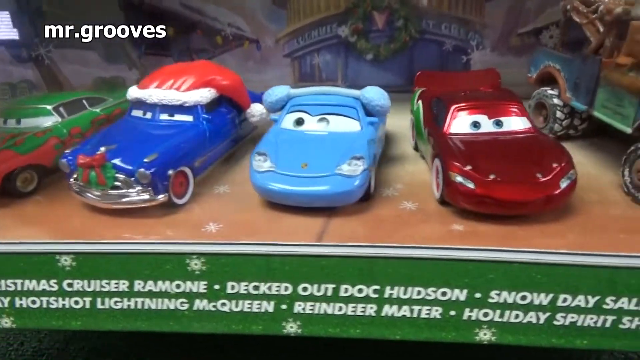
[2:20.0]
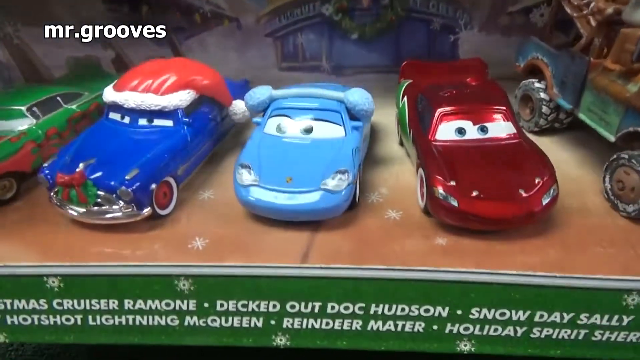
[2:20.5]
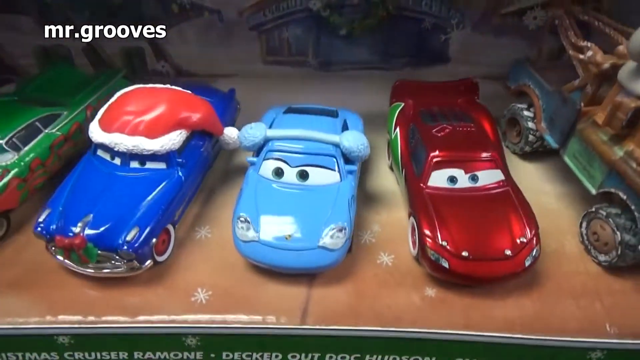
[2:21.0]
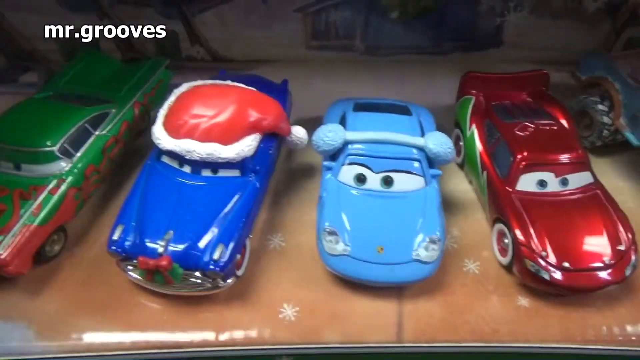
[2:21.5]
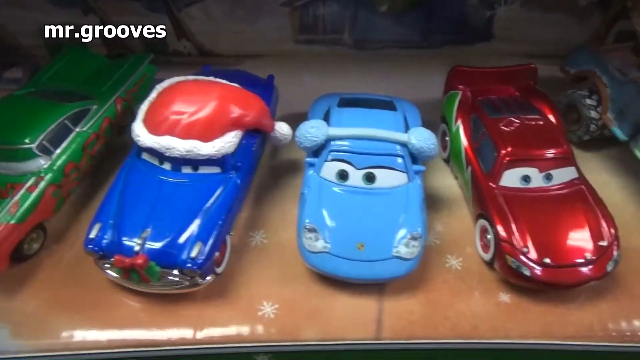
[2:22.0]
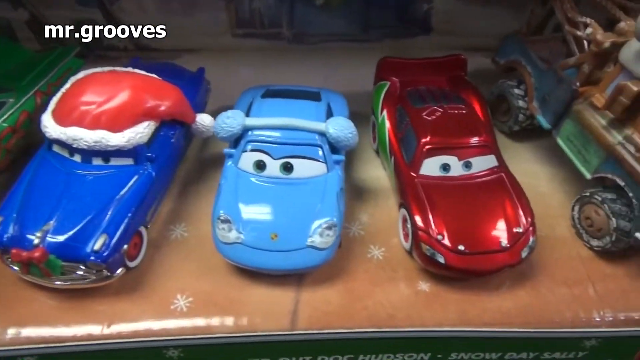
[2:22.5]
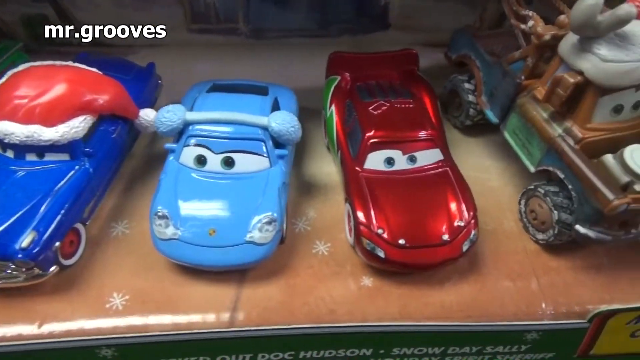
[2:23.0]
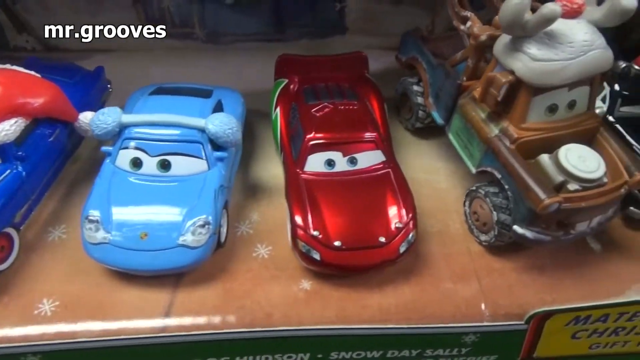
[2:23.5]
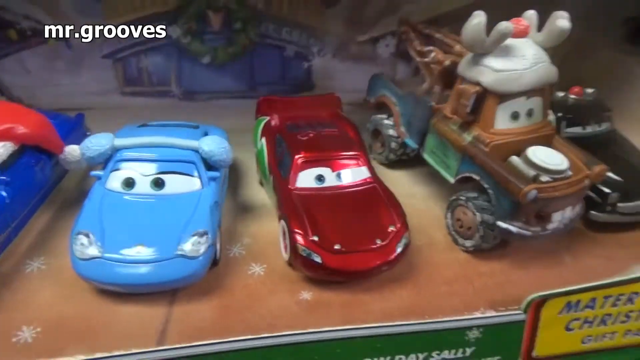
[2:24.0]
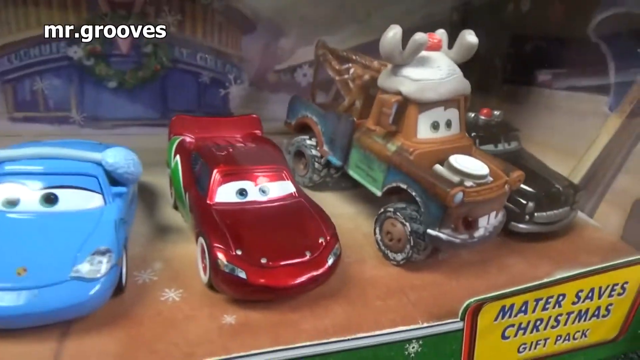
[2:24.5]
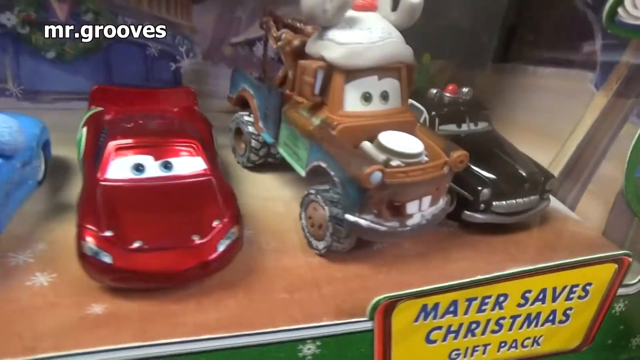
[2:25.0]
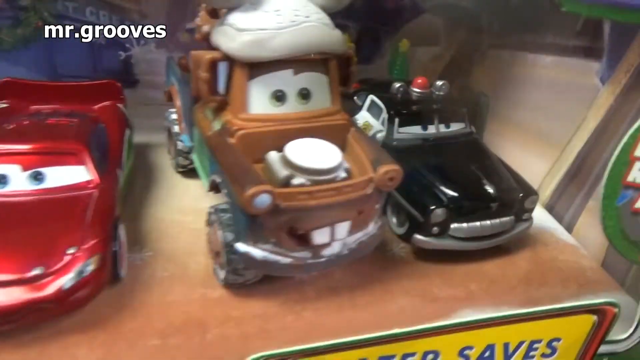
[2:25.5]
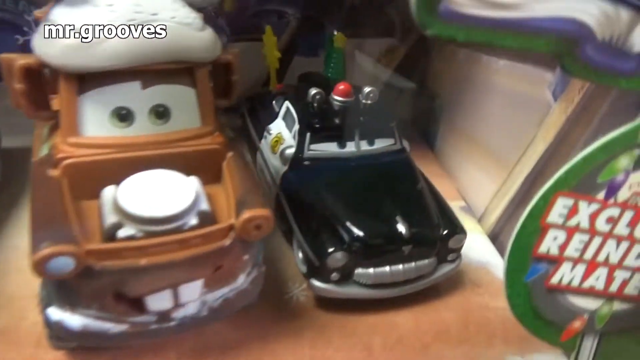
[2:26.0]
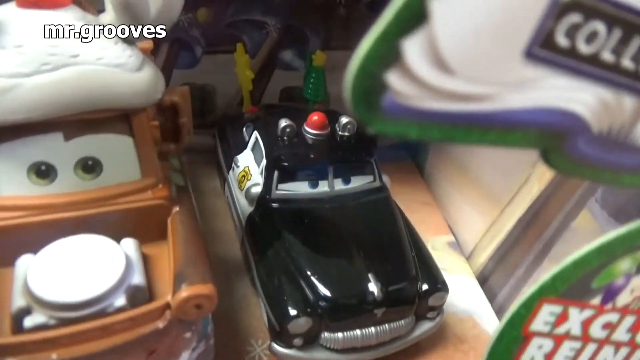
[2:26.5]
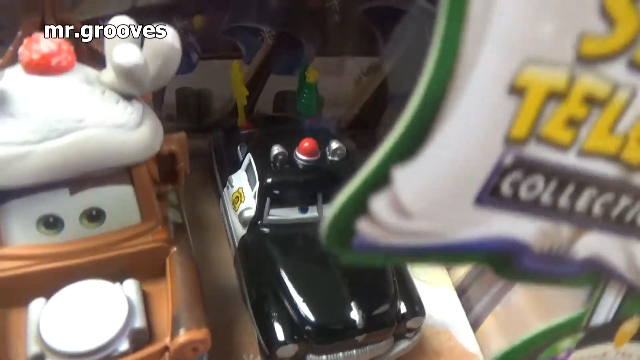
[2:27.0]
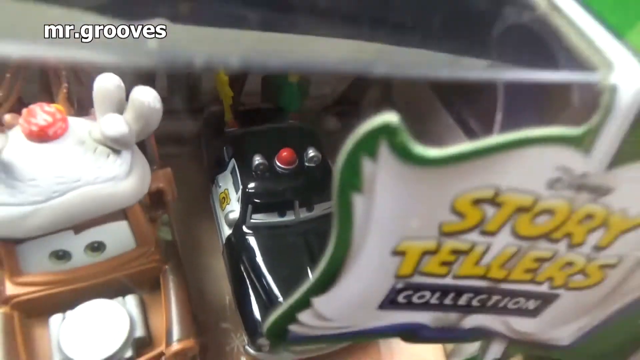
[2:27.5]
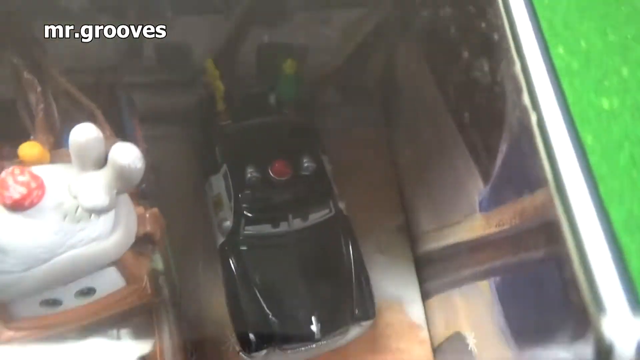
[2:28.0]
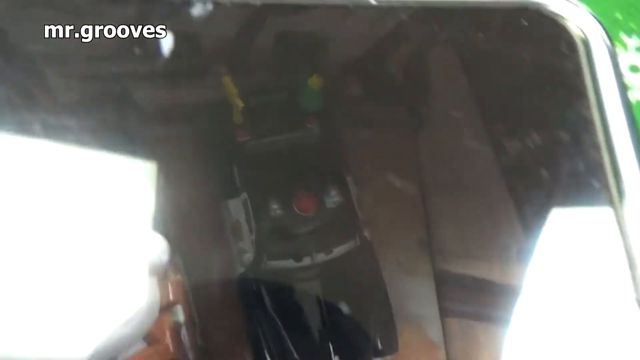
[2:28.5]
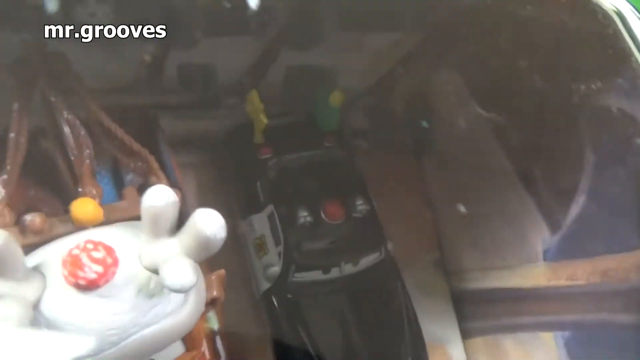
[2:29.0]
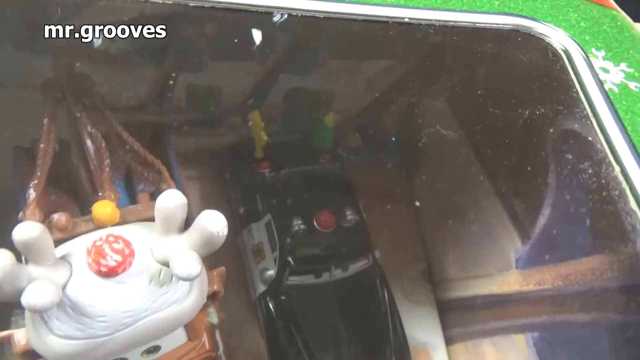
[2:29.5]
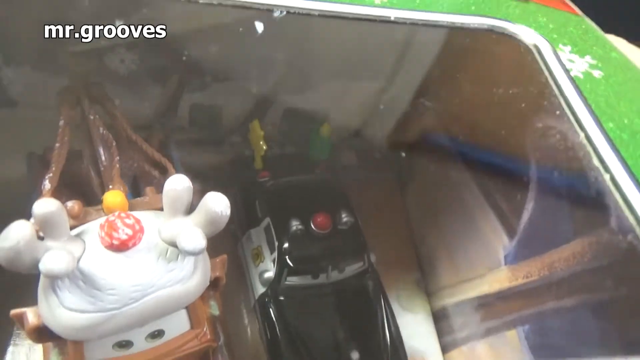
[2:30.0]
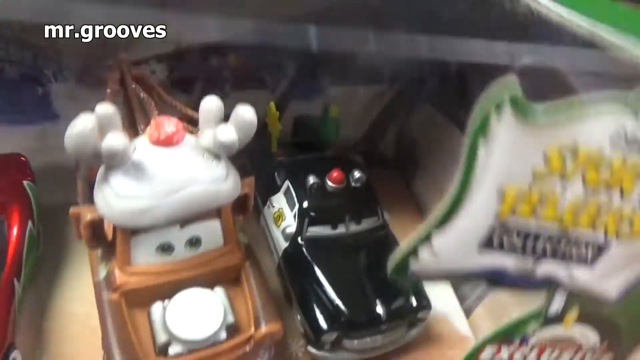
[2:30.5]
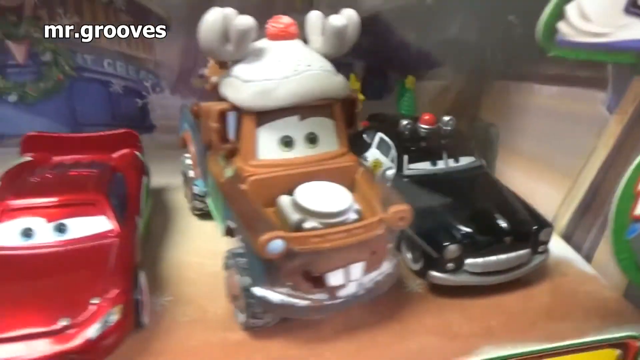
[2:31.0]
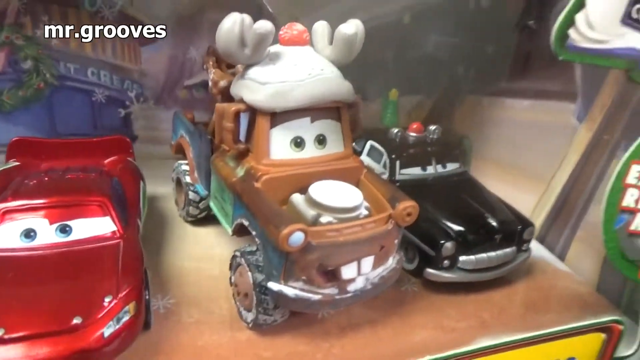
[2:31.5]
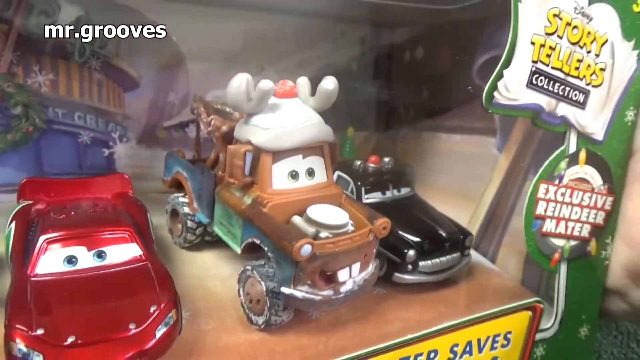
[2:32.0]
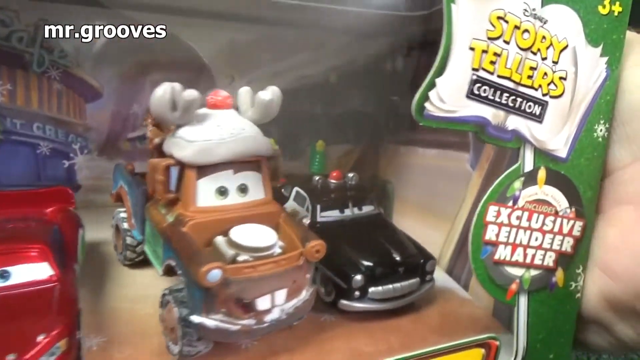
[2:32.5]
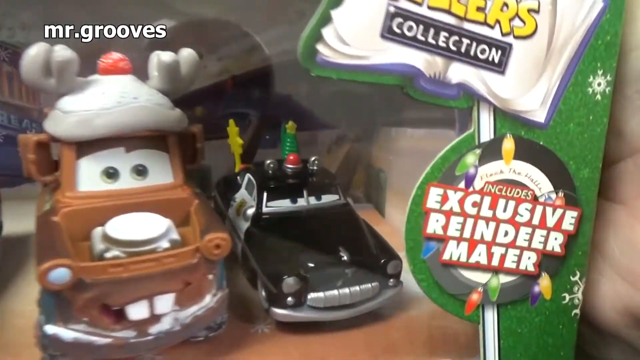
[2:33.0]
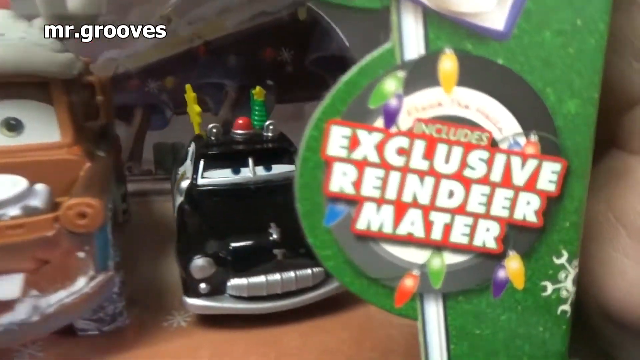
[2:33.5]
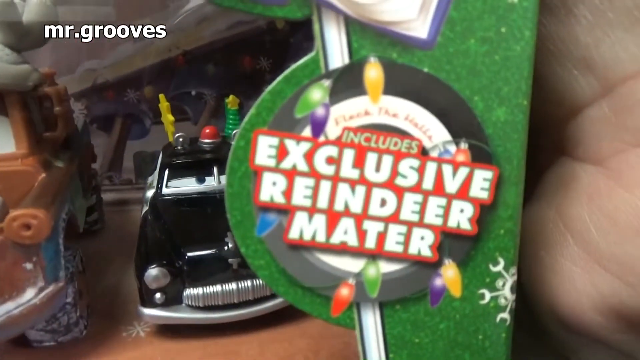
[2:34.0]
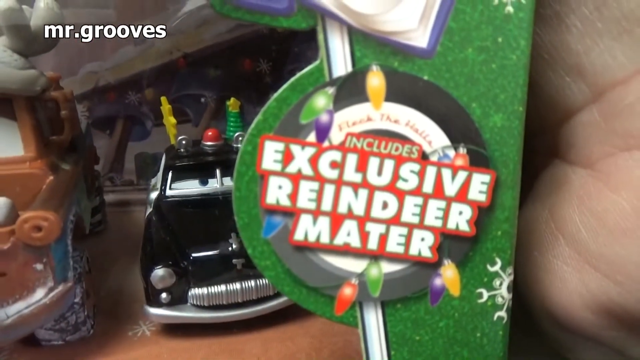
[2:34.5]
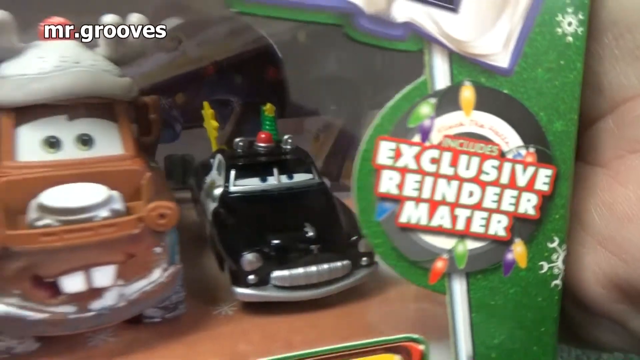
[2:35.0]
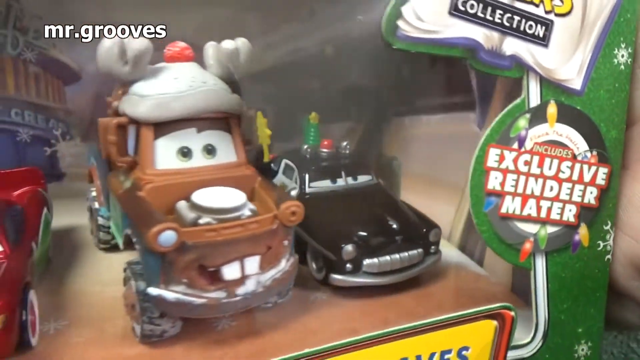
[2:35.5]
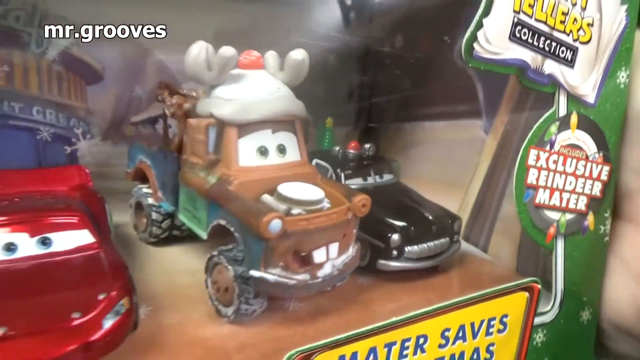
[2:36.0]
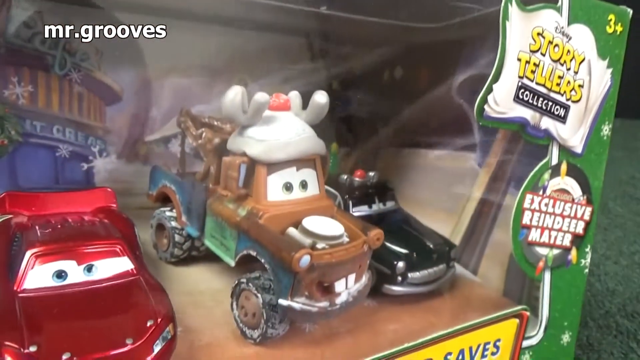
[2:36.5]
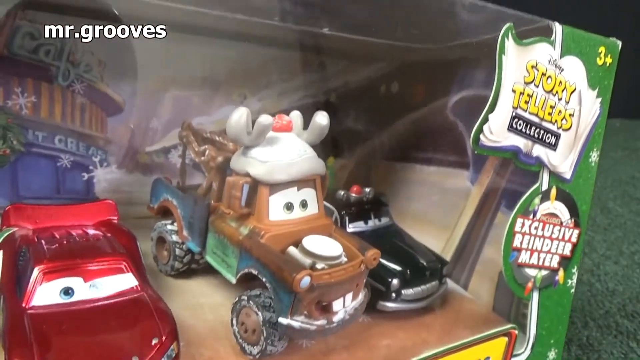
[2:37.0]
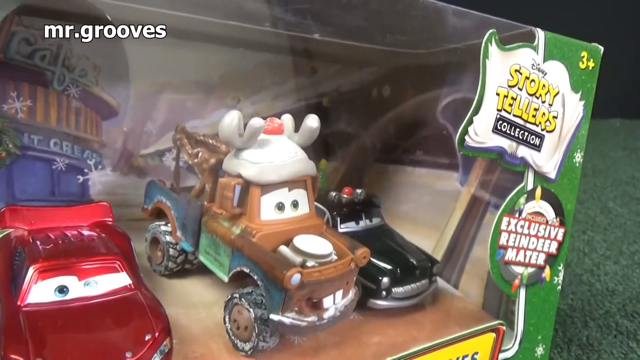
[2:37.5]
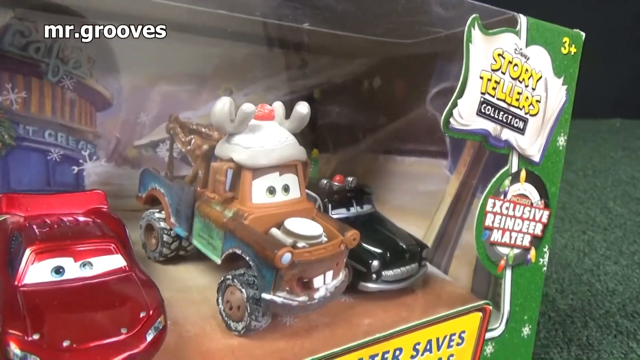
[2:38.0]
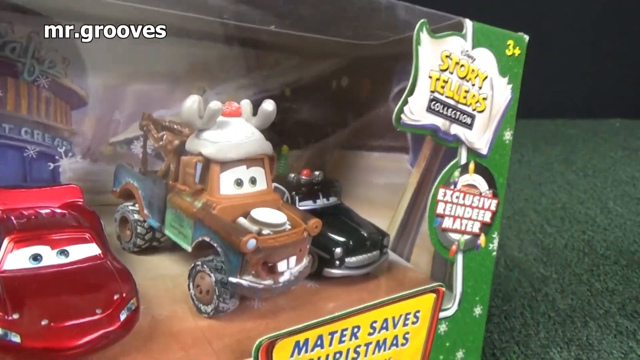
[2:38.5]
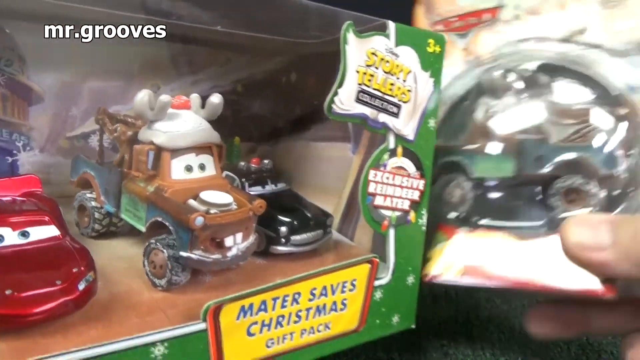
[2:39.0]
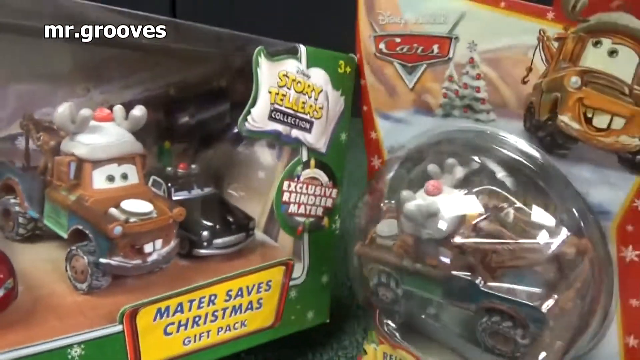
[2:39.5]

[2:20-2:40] Hands hold a car package with different cars in the collection. Inside the box are colorful car characters that have eyes and are Christmas-themed, wearing Christmas accessories. A banner on the packaging says "Mateo saves Christmas"; the banner is yellow with blue writing. The packaging looks like a gift pack, and it has "storytellers collection" on the right. The packaging is shown around and around in a zoomed view. Then the hands carry another package containing a brown car, also a character from Cars, which looks like a truck. On this packaging there is a white and red Christmas tree, and it looks like there is snow on it. This truck is also included in the other package with the collection of many cars.